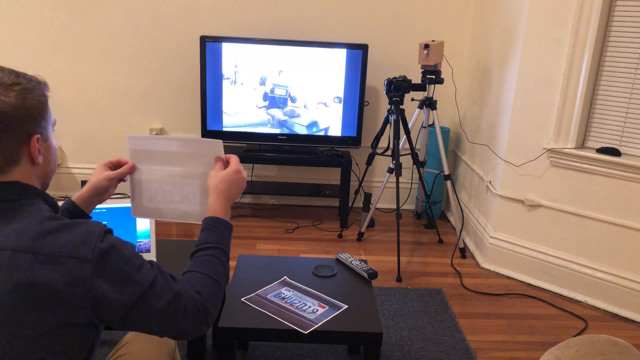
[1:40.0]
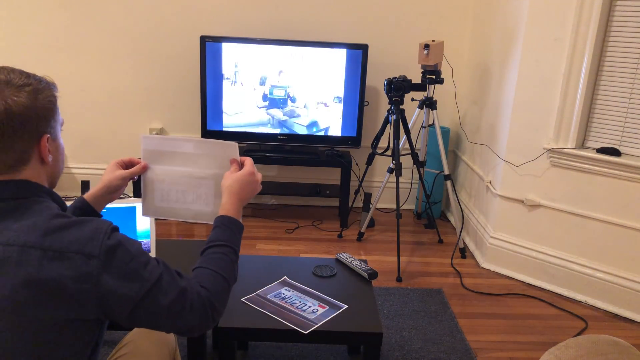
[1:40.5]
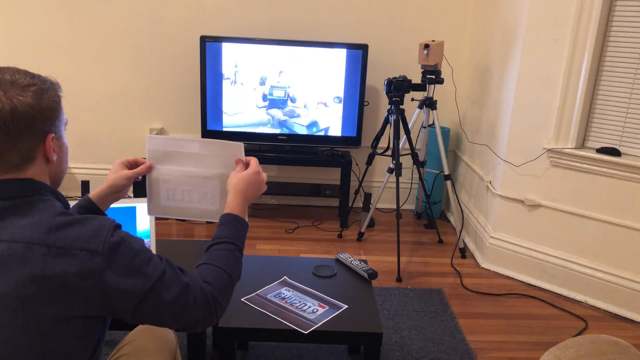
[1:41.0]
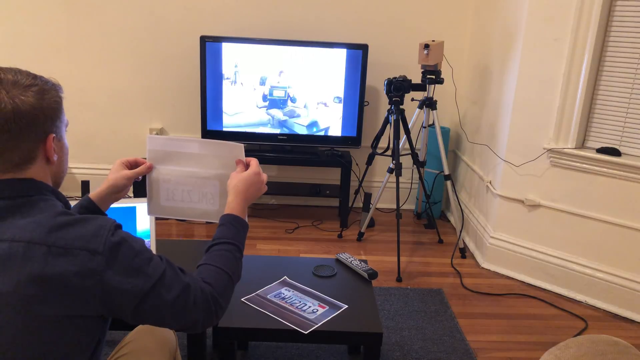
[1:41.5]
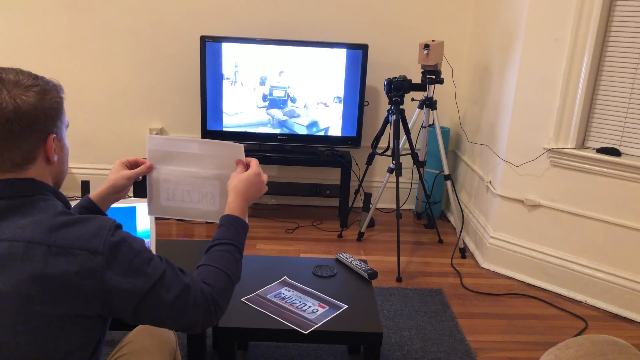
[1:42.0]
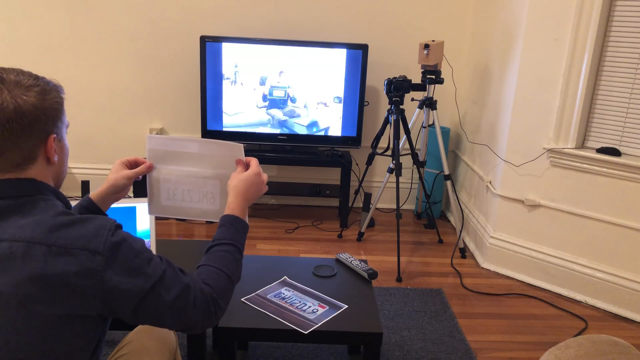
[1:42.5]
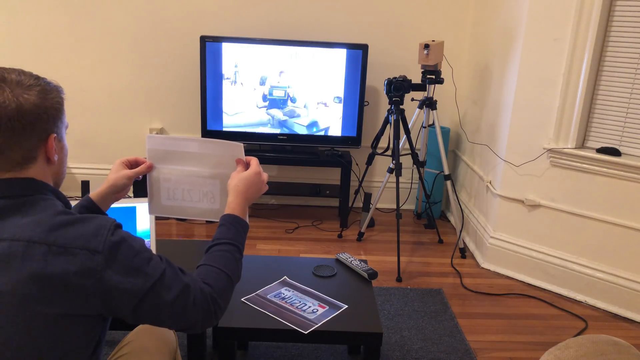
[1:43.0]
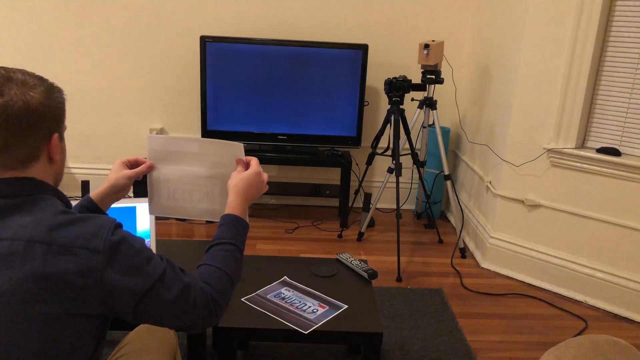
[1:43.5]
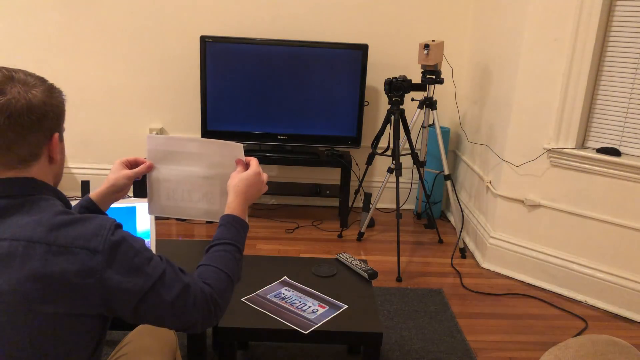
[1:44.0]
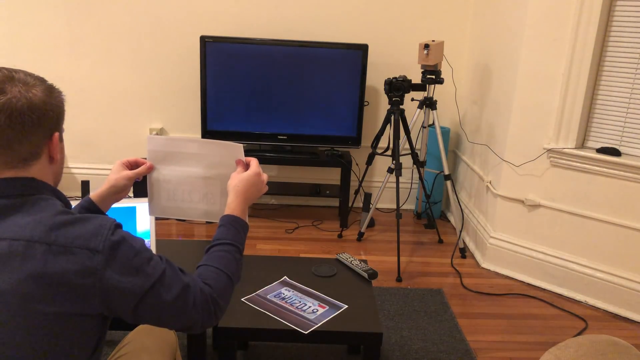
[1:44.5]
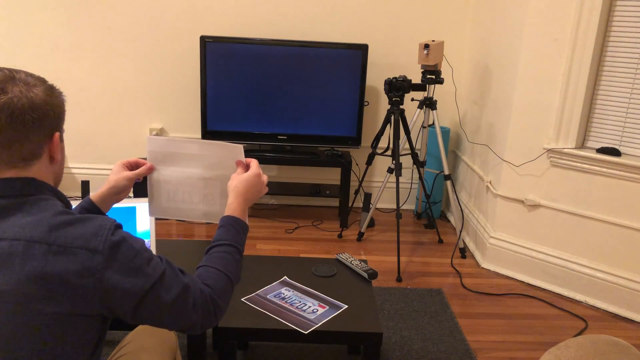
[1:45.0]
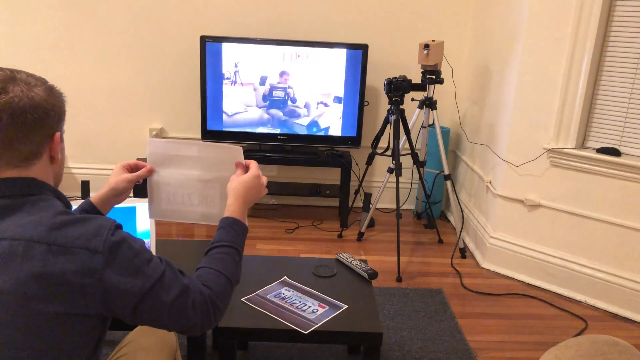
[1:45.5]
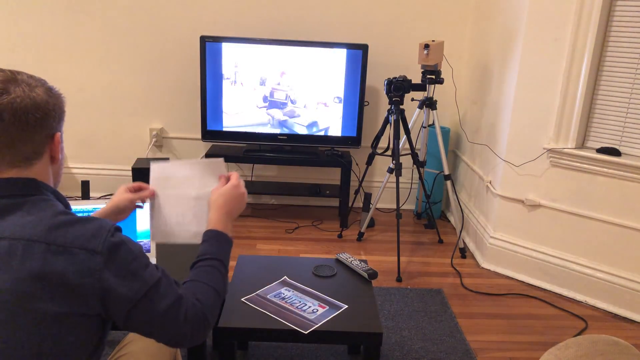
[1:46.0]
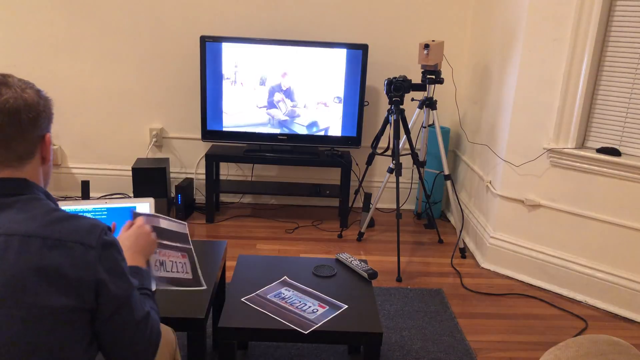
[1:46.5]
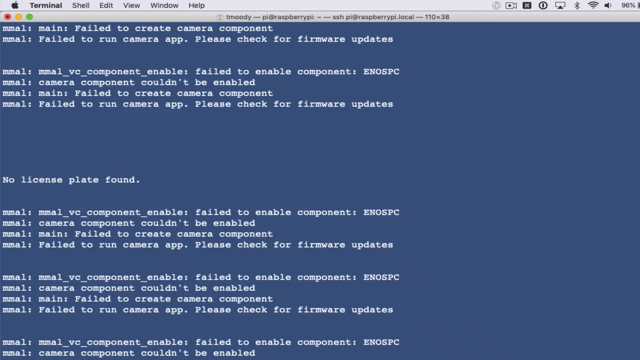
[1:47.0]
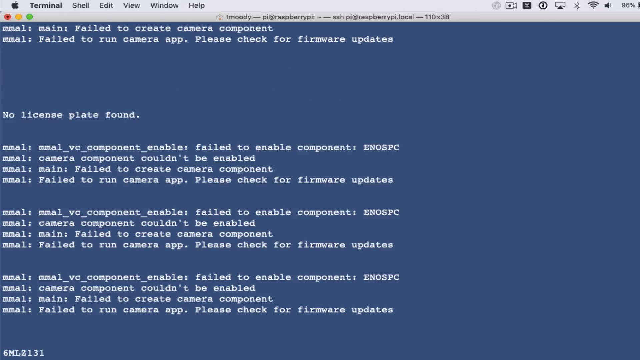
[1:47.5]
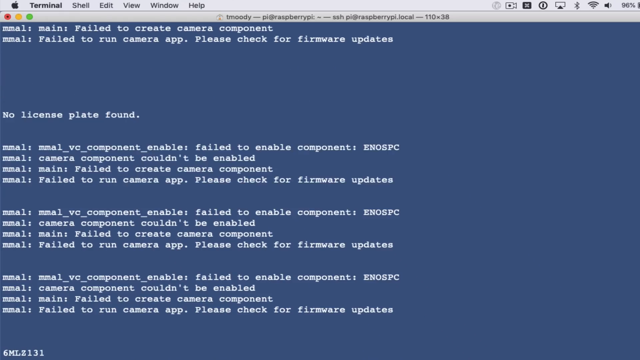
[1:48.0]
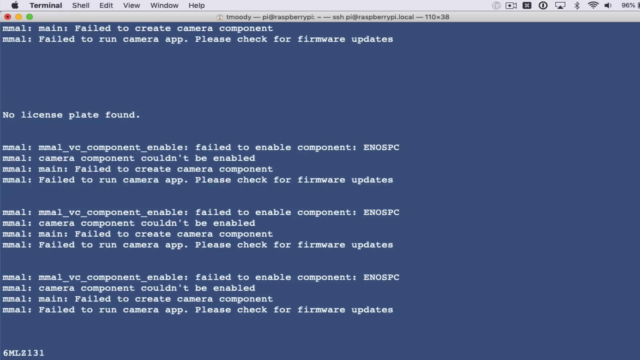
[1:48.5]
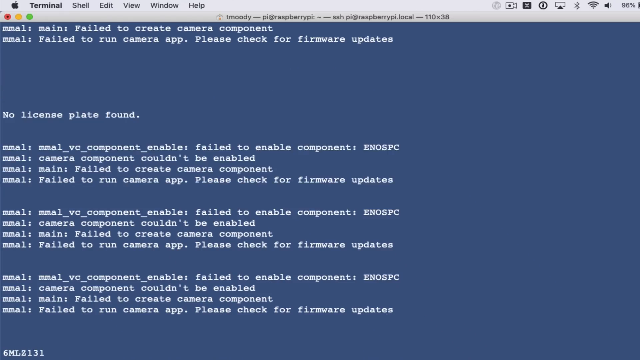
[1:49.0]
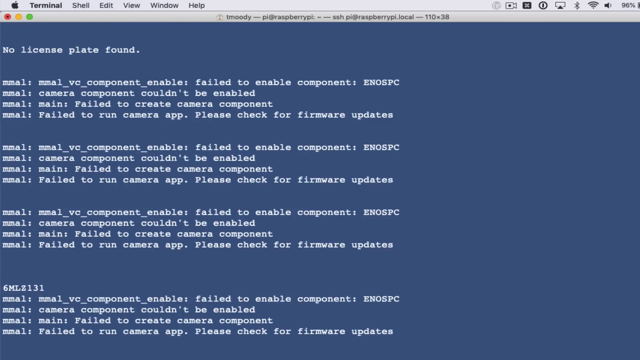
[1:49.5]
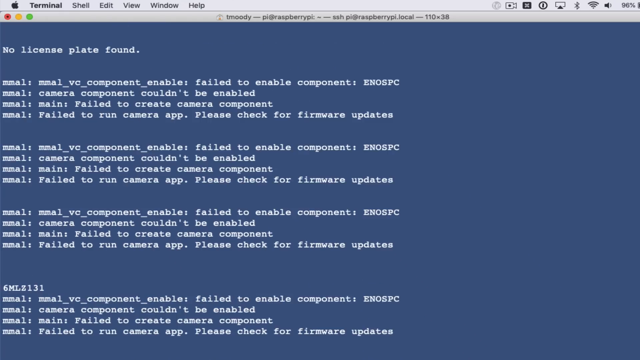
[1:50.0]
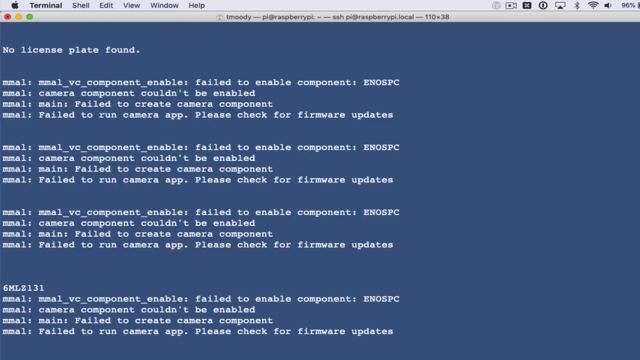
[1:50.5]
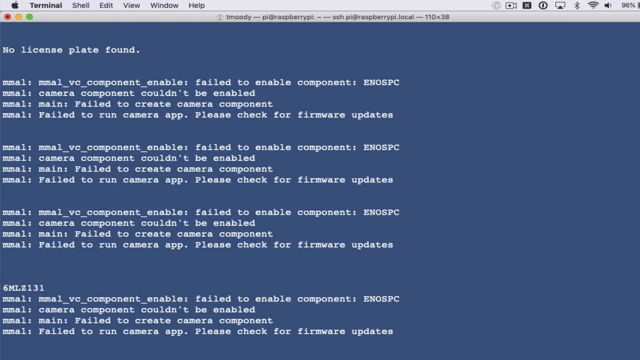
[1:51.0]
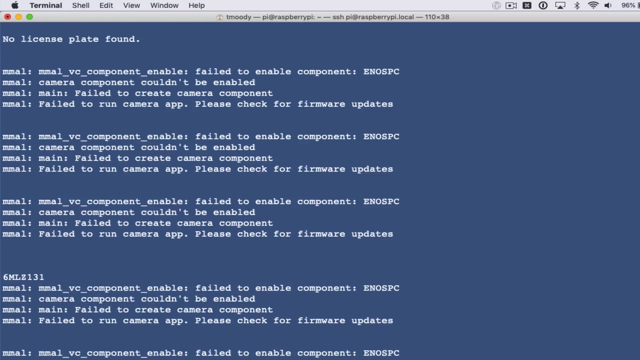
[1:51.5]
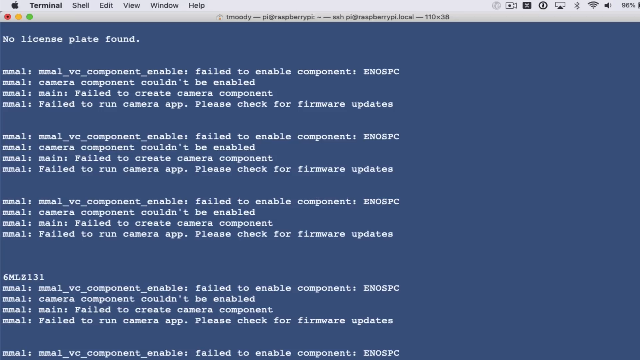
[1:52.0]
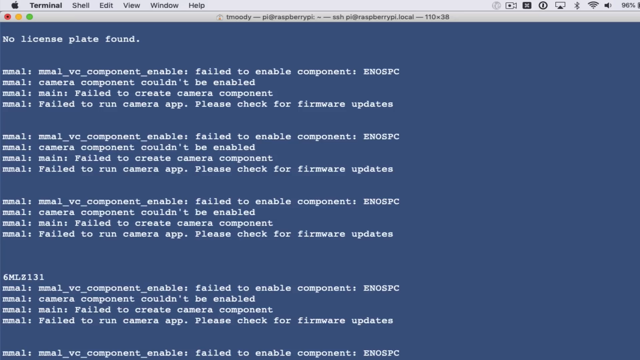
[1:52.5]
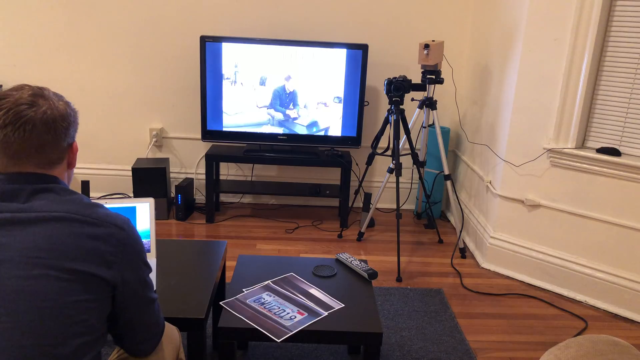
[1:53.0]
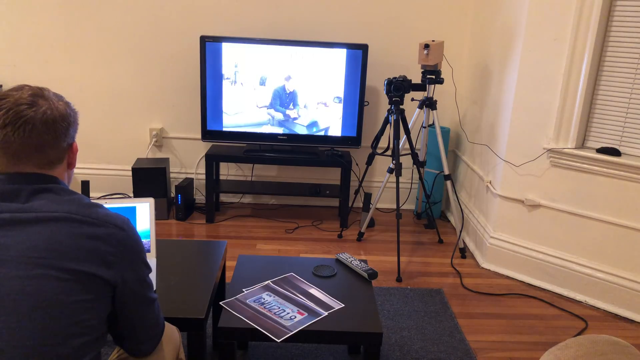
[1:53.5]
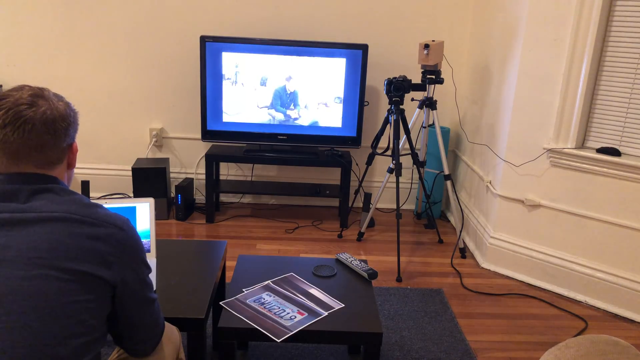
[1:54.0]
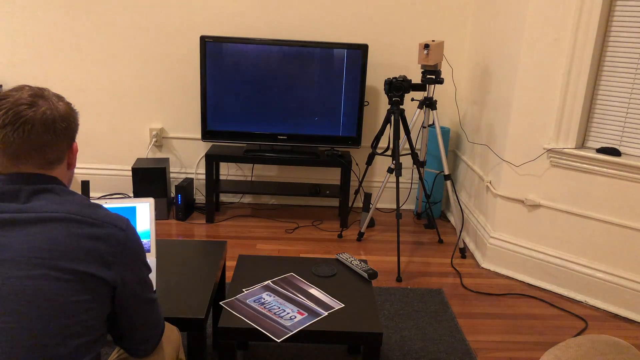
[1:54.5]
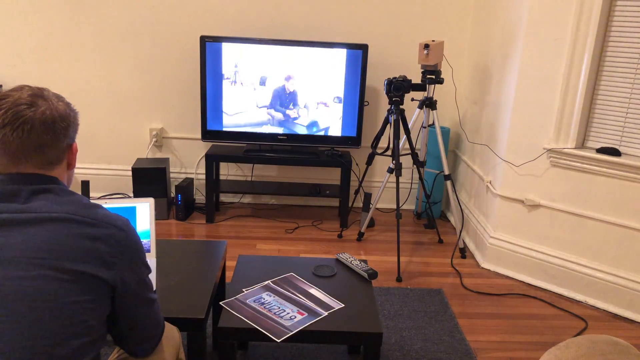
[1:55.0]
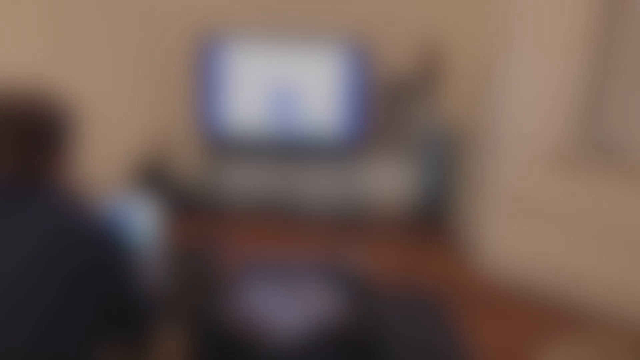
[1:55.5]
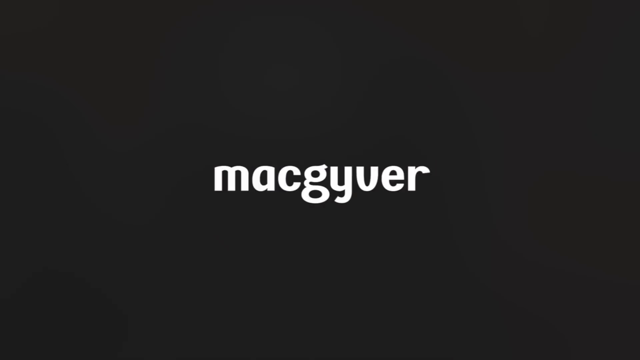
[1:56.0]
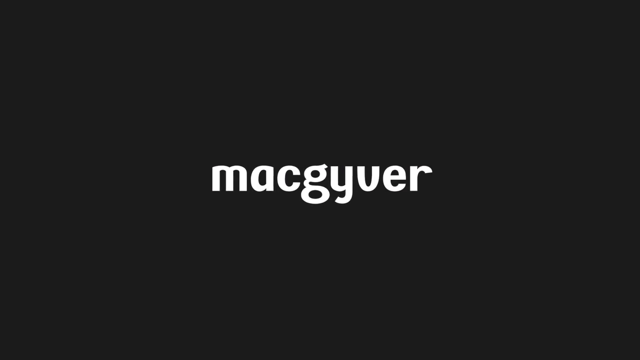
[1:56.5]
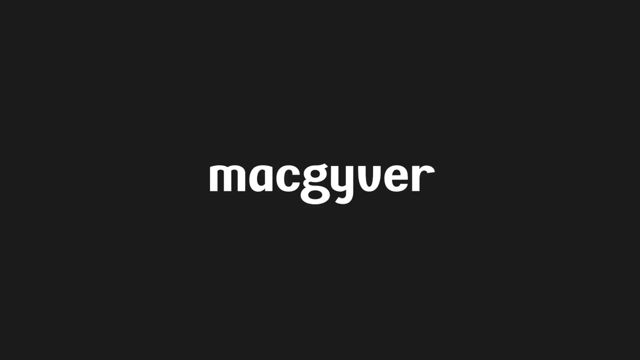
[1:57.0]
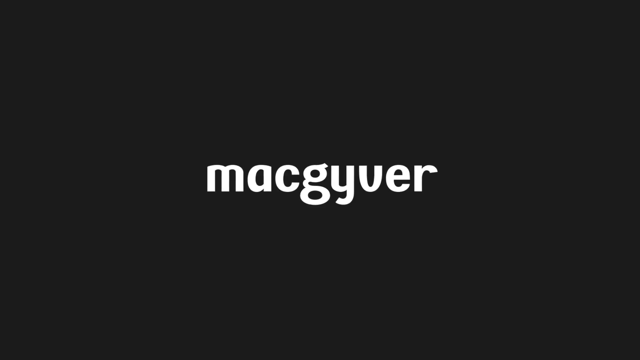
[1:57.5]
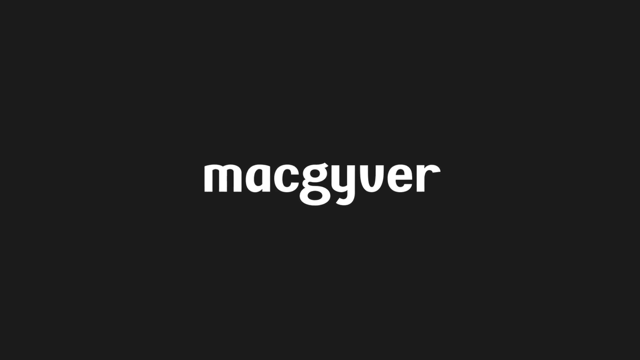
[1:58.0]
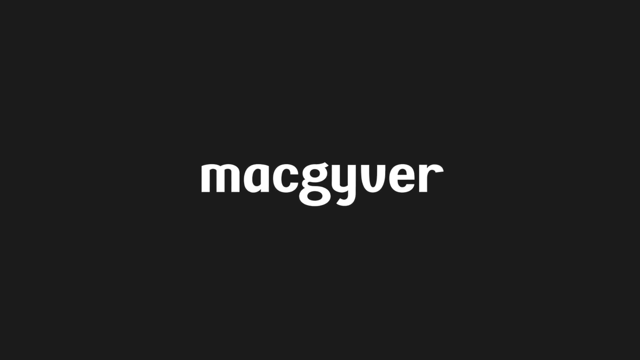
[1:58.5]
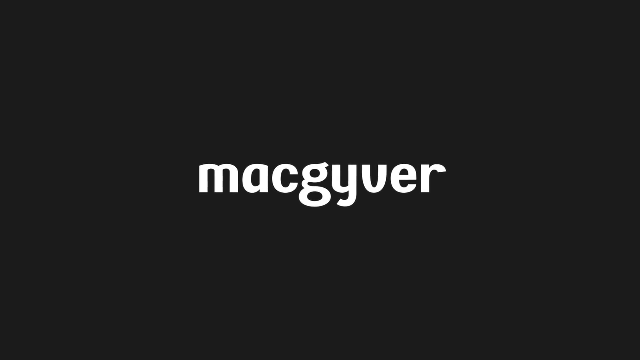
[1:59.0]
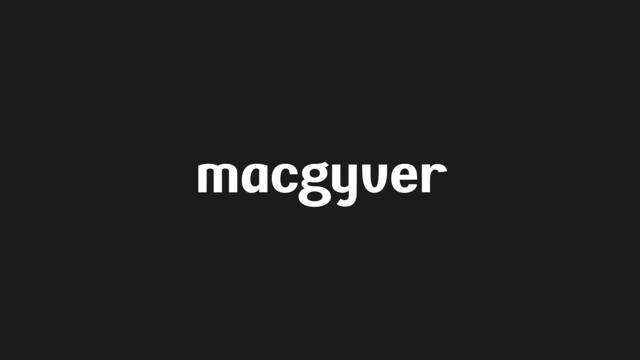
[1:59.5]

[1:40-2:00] The man is still sitting in his living room with a tripod camera set up beside him, and he is projected on his TV screen. He still holds the picture of the license plate and shows it to the camera, which looks like it takes the picture. The paper and the outline of the license plate are visible in the TV image the camera is picking up. The video switches back to the screen share, which shows that the license plate number was not picked up at all: it says "no license plate detected" along with a lot of extra source code.